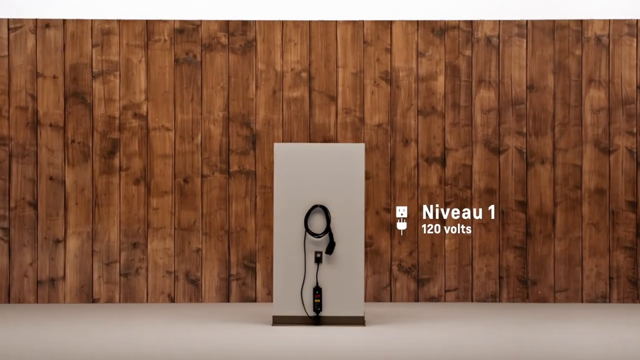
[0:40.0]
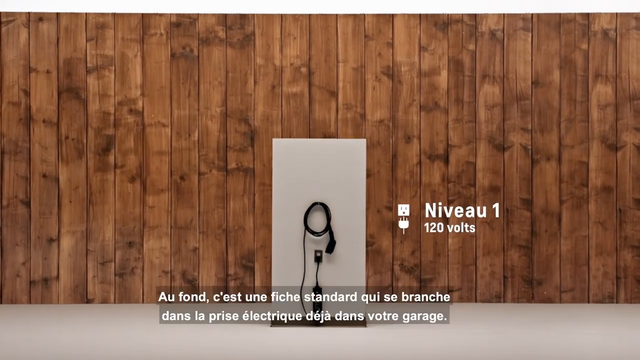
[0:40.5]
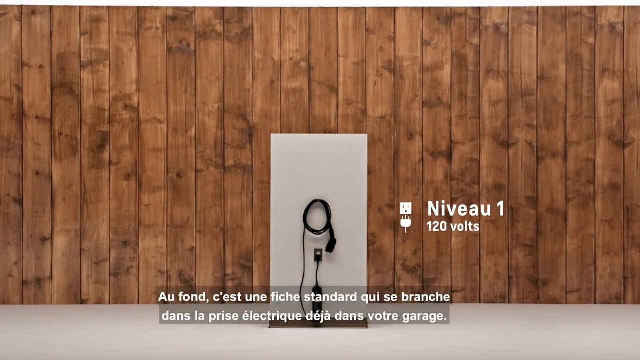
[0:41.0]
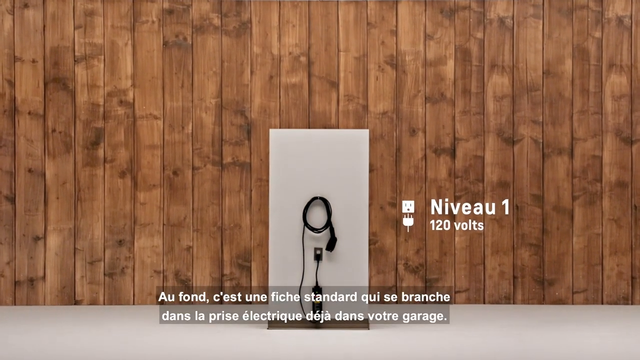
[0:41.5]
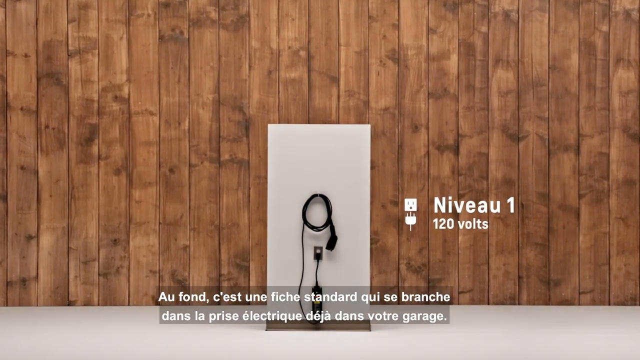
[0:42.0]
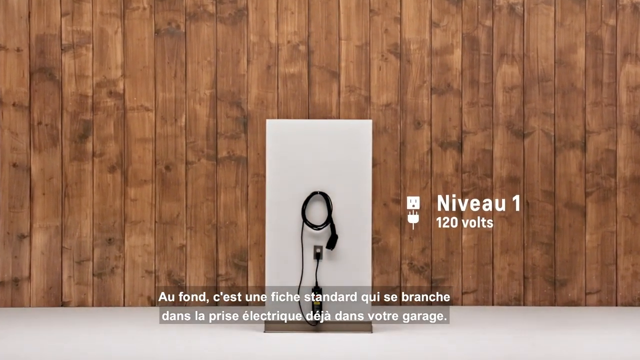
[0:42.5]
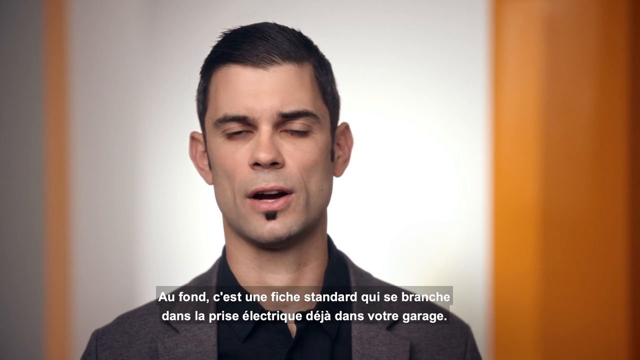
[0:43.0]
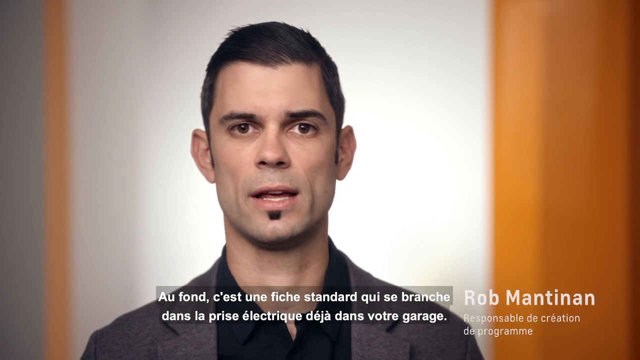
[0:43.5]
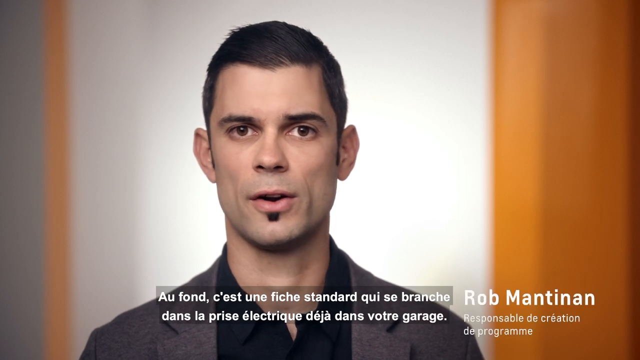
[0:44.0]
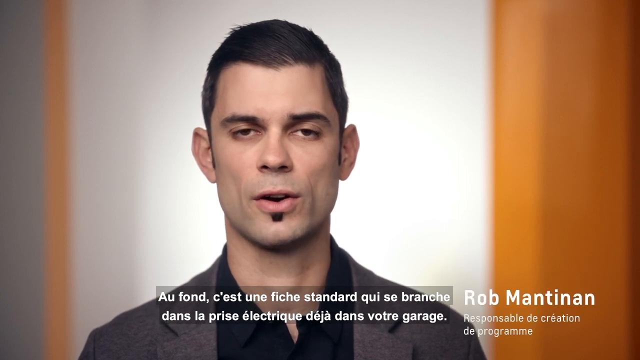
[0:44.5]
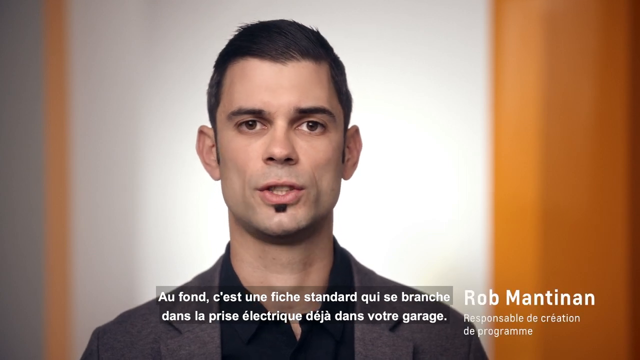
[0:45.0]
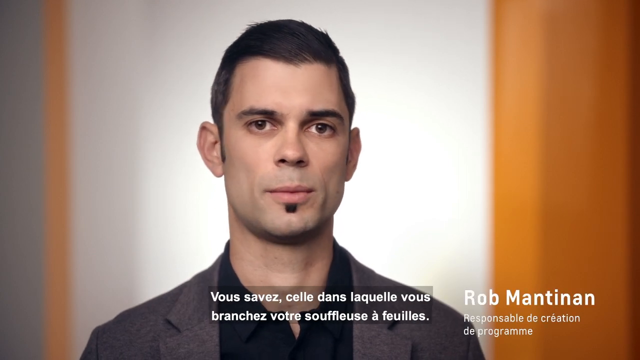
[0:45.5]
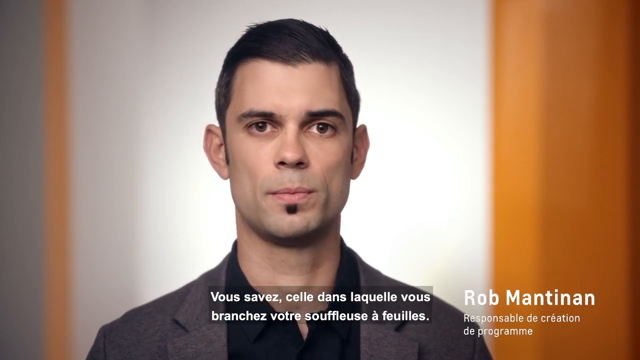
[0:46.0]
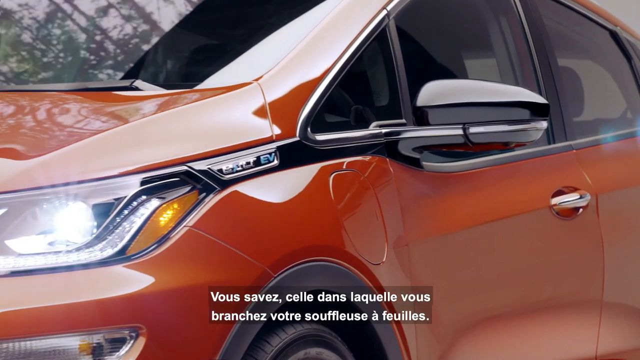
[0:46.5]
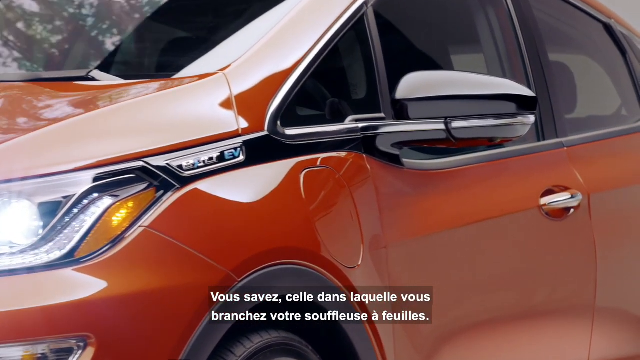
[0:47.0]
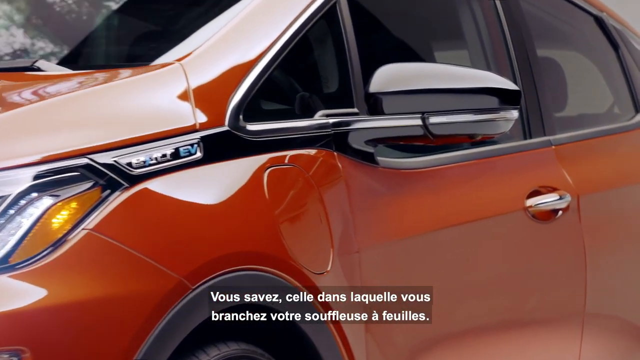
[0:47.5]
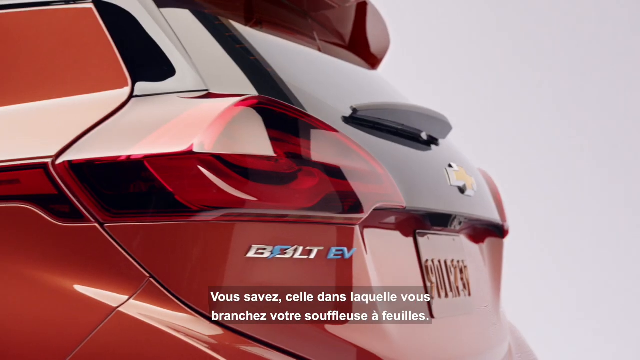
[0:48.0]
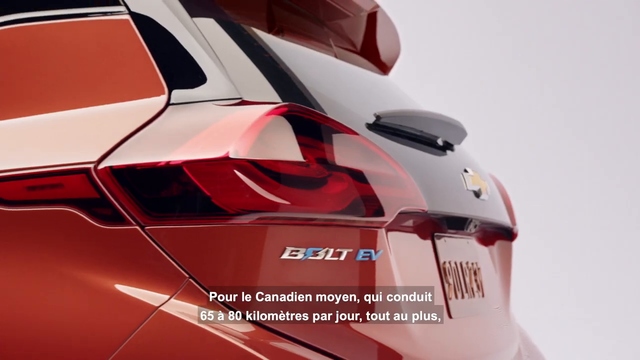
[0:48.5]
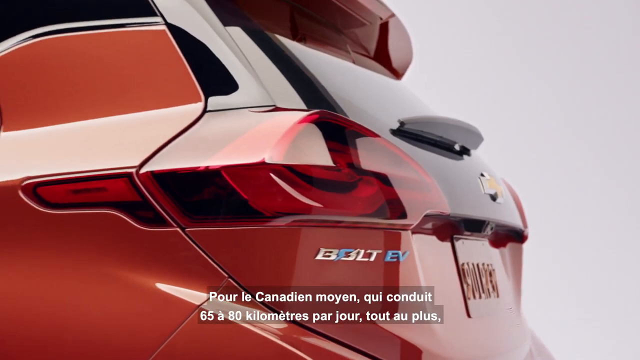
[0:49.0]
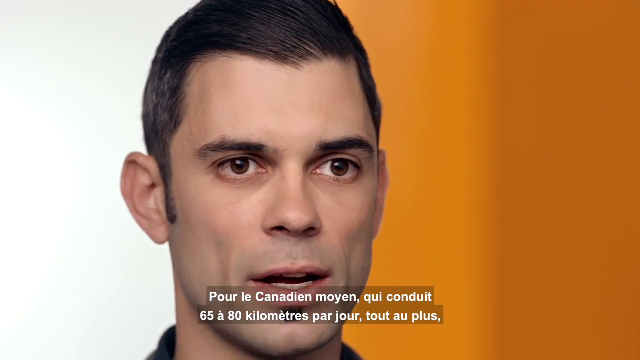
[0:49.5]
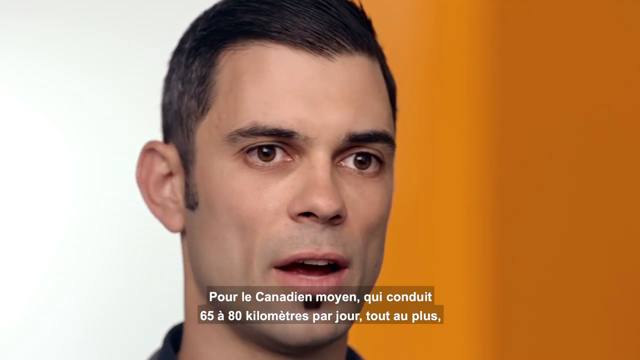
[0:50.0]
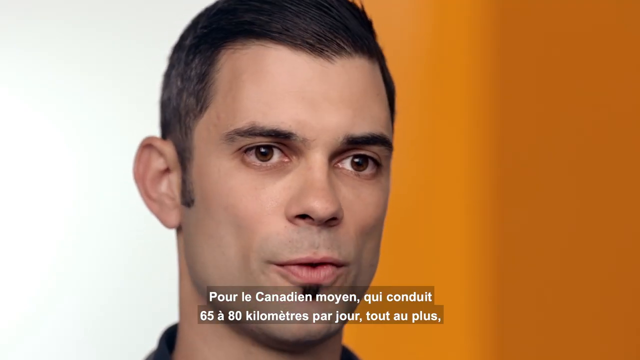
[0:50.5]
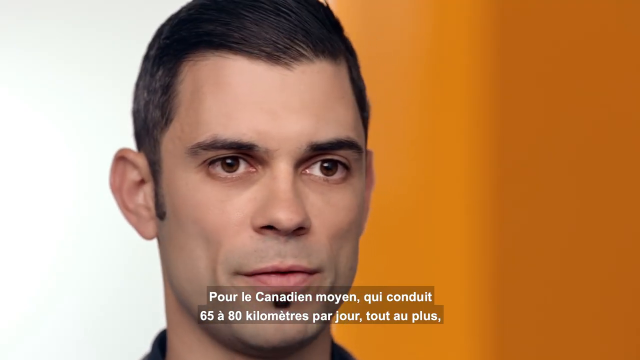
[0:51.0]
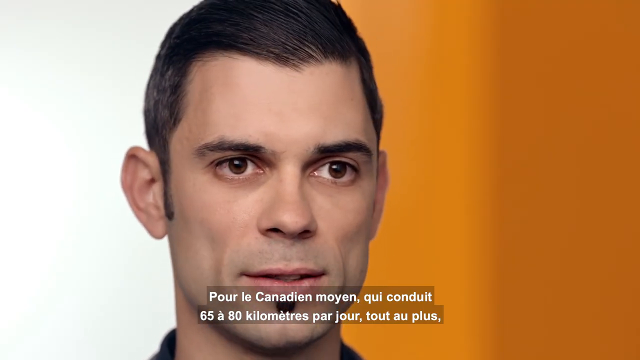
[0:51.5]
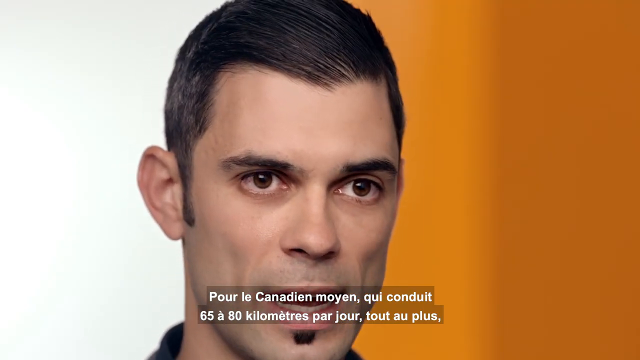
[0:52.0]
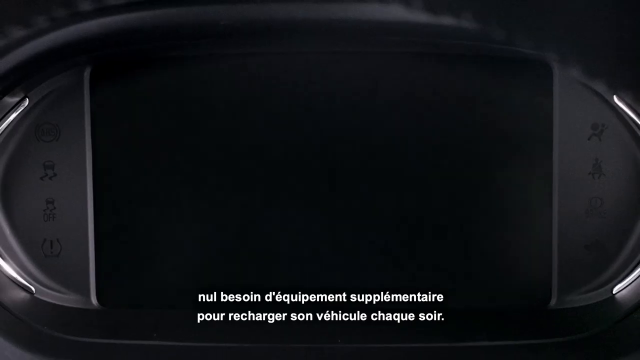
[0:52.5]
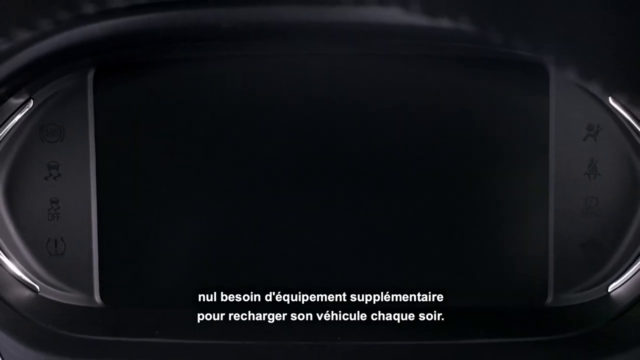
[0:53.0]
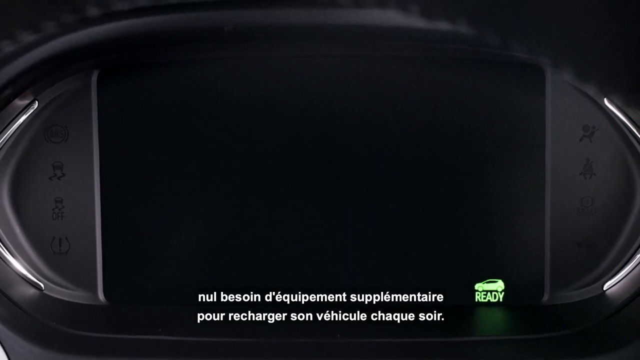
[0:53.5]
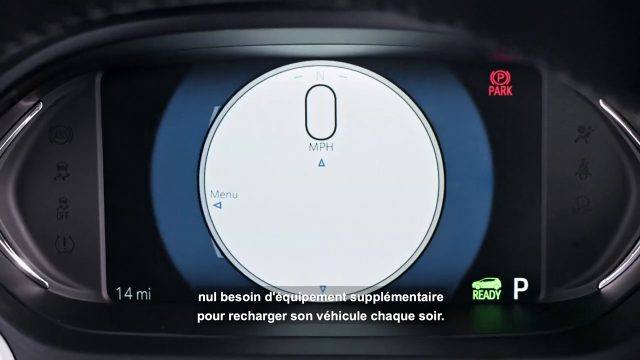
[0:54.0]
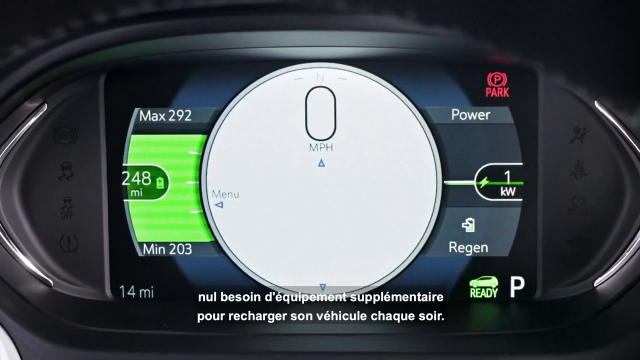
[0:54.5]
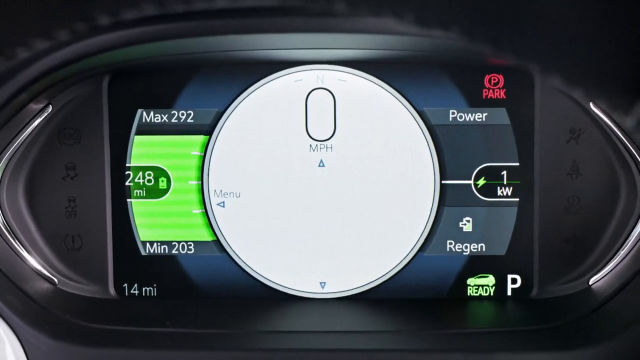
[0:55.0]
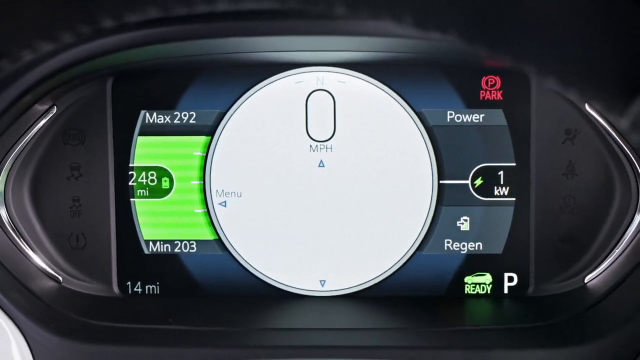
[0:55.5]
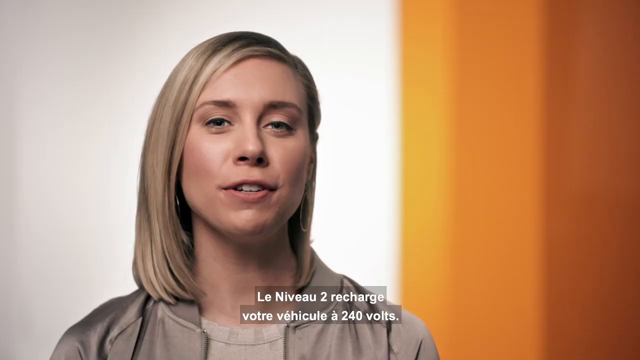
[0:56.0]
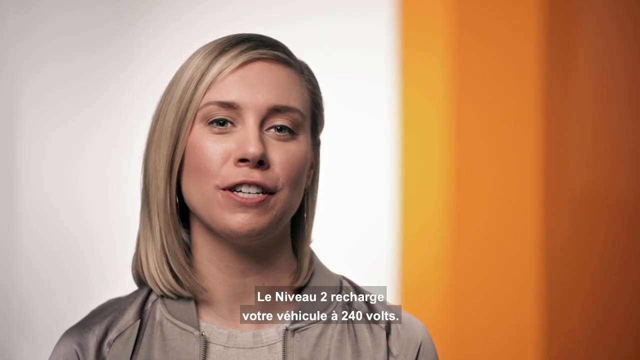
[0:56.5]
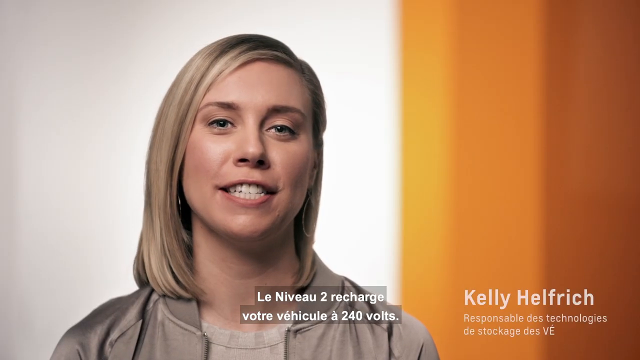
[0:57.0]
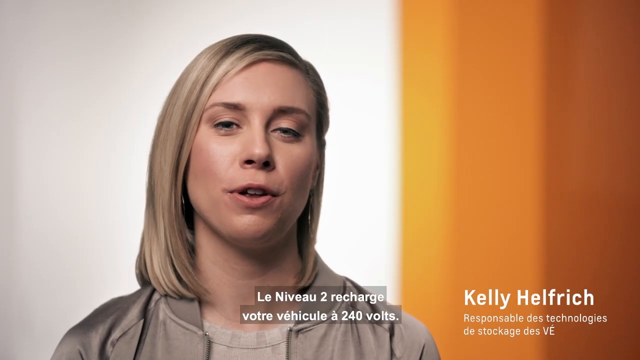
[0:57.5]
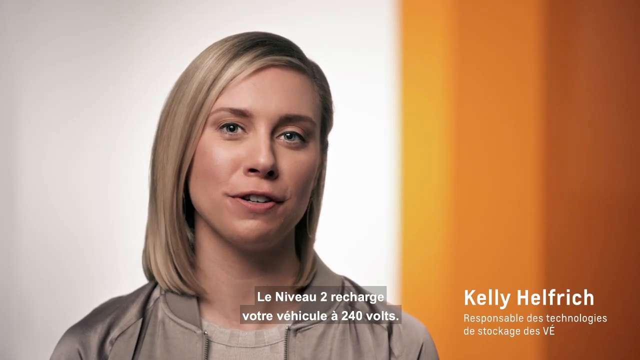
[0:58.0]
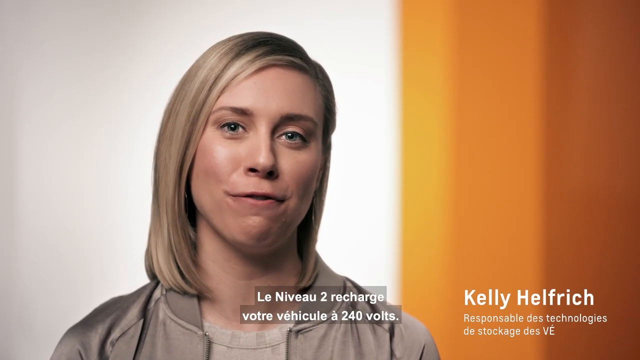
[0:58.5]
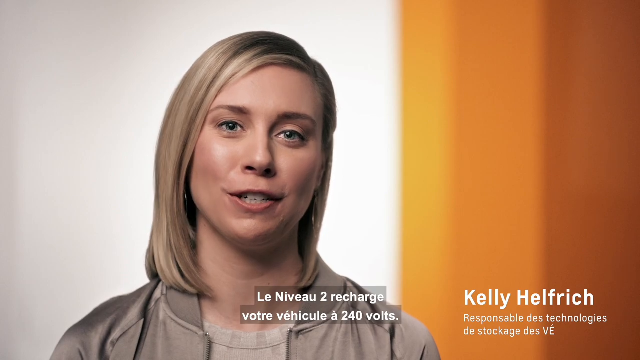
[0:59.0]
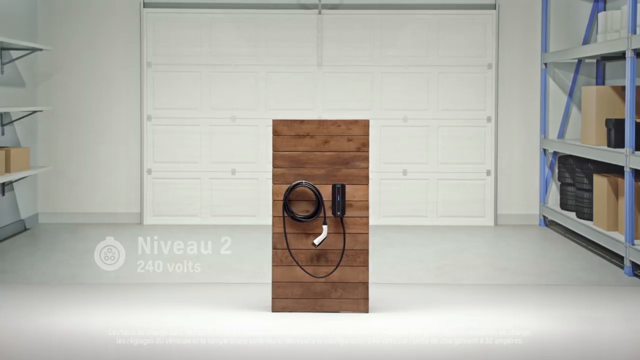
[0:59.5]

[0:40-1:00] A Volt car's recharging system is shown: a simple charger, called Nouveau 1, at 120 volts, with a wooden wall of wood planks behind it. A man then appears and talks. He is a young man in his 20s with brown eyes, very short black hair, a tiny goatee under his lip, and long sideburns. Footage follows of the Volt driving down the road; it is red with black trim, "Volt EV" appears in the lower left corner, and a license plate is visible. The video cuts back to the man talking, then right back to the vehicle, where the dashboard appears with a blue circle and miles per hour. On the left it reads "max 292" and "minimum 203"; it looks almost fully charged and shows 248 miles per something. On the right it reads "park", below that "power", then "1 kilowatt", below that "region", and below that "ready" and "park". A woman then appears; her name is Kelly Helfrich, and text below states that she is responsible for the technology of the electric vehicles.